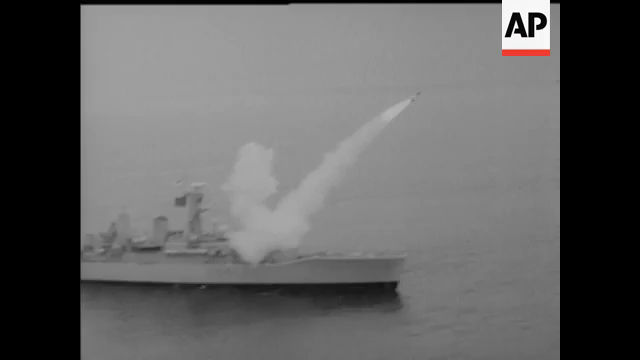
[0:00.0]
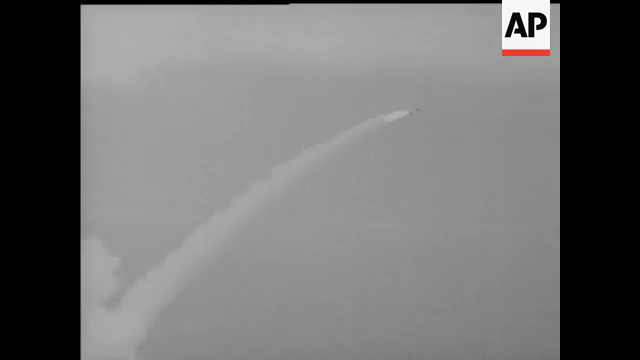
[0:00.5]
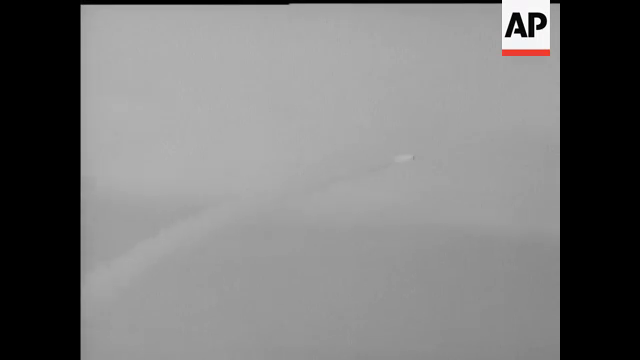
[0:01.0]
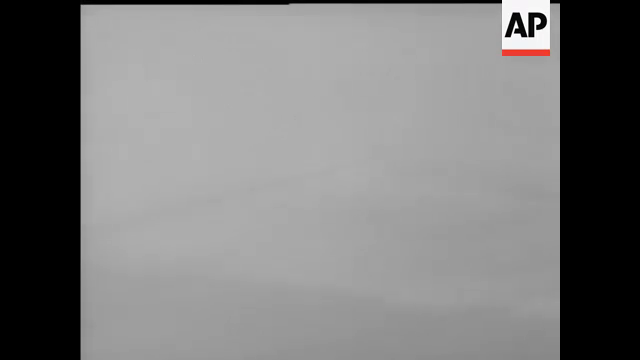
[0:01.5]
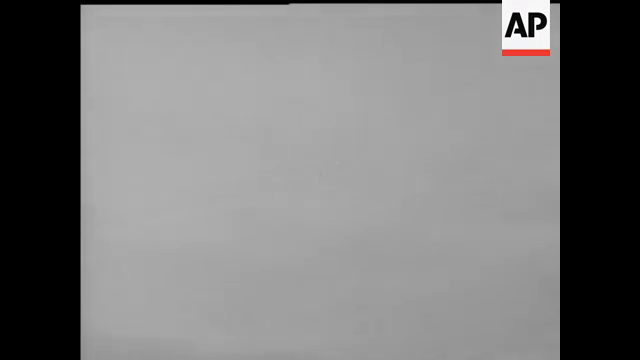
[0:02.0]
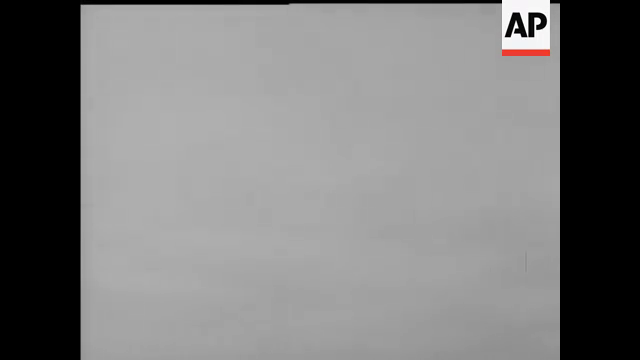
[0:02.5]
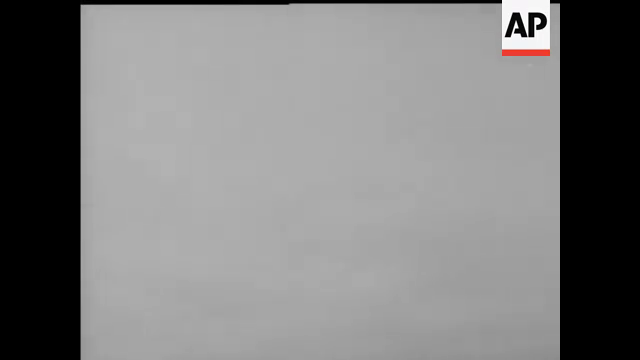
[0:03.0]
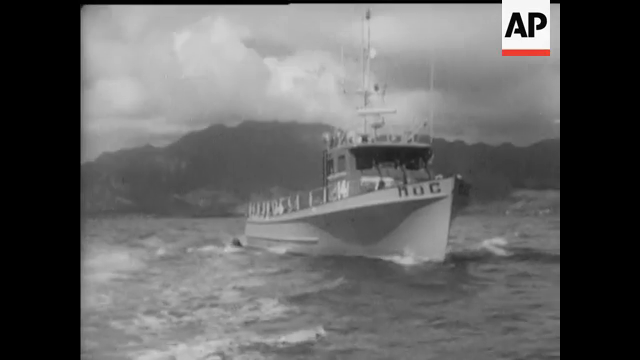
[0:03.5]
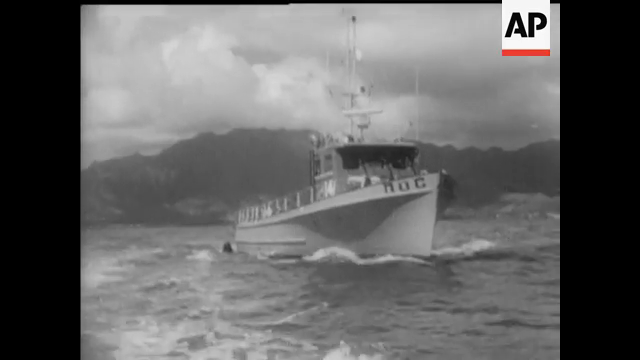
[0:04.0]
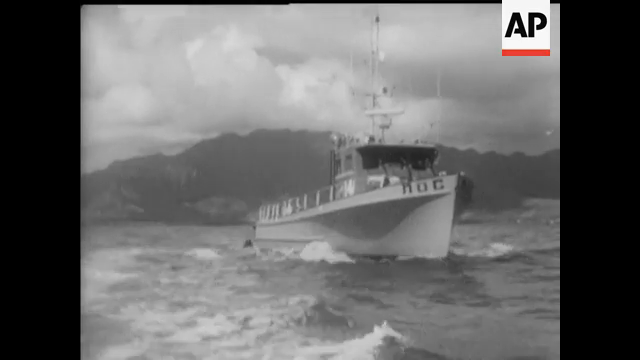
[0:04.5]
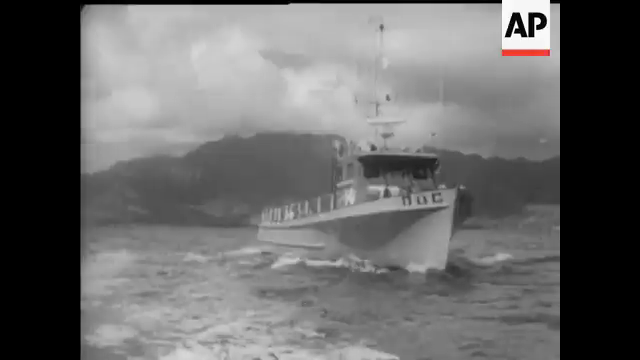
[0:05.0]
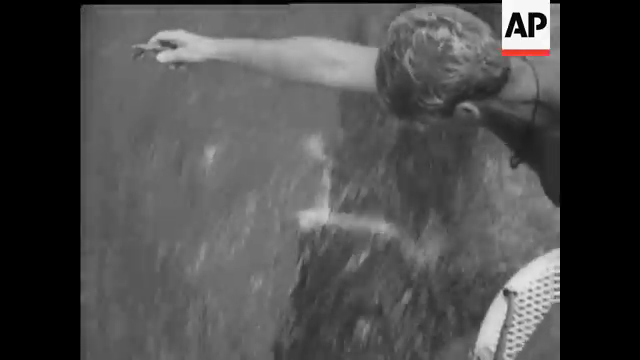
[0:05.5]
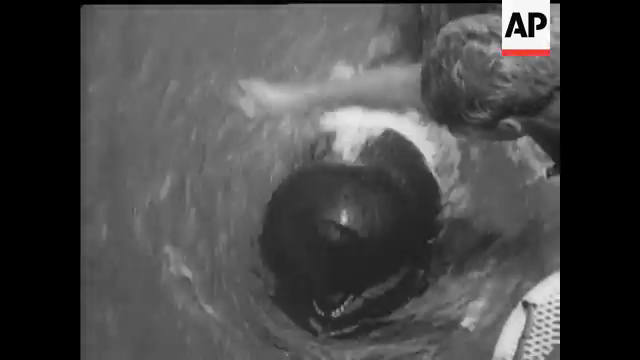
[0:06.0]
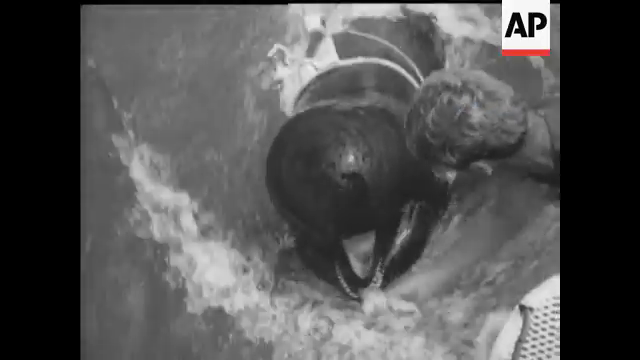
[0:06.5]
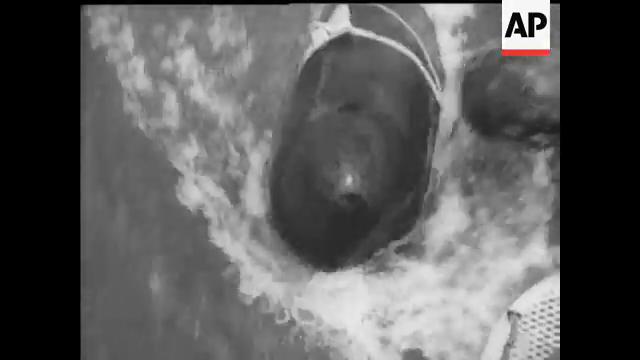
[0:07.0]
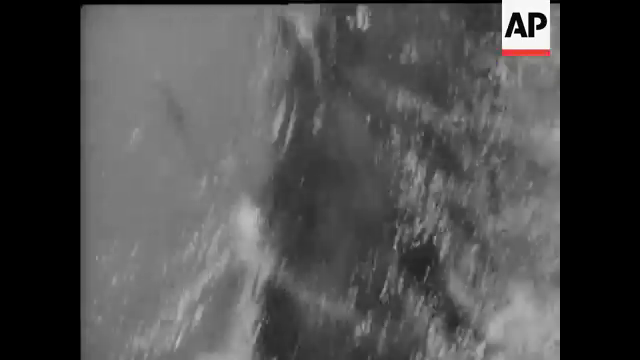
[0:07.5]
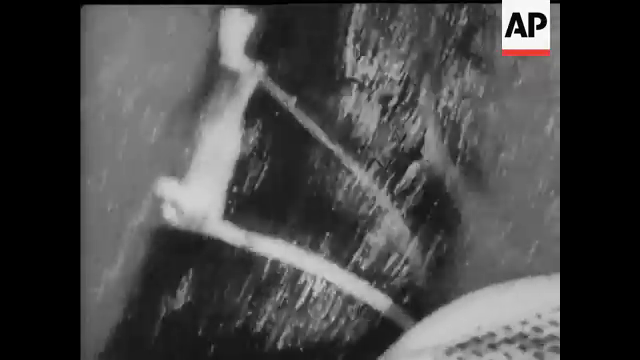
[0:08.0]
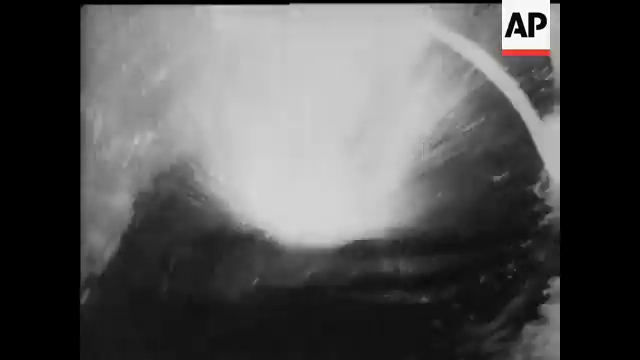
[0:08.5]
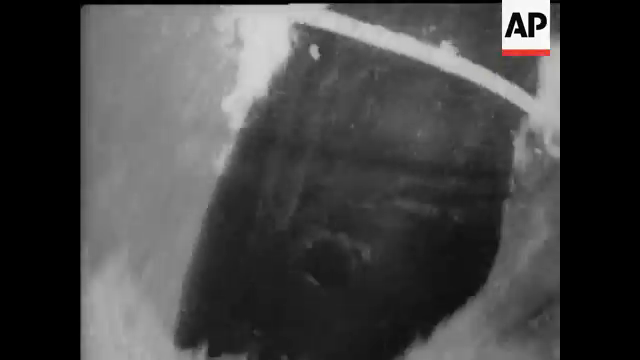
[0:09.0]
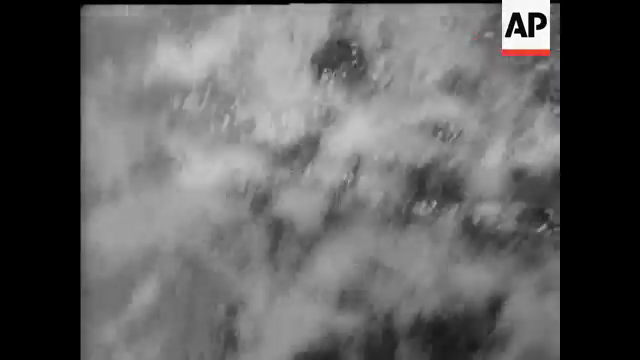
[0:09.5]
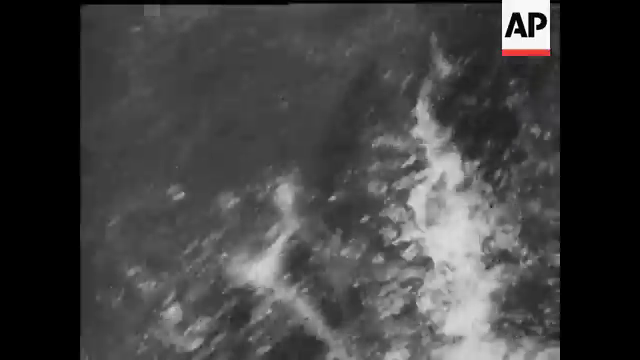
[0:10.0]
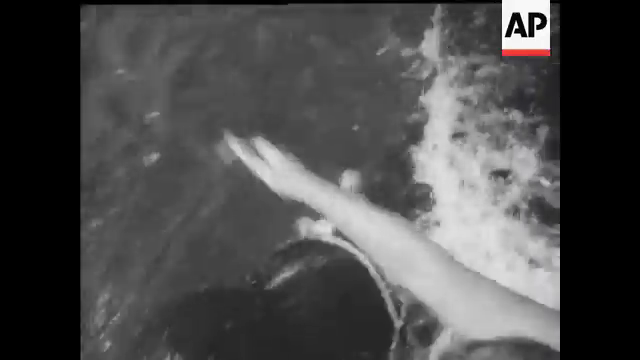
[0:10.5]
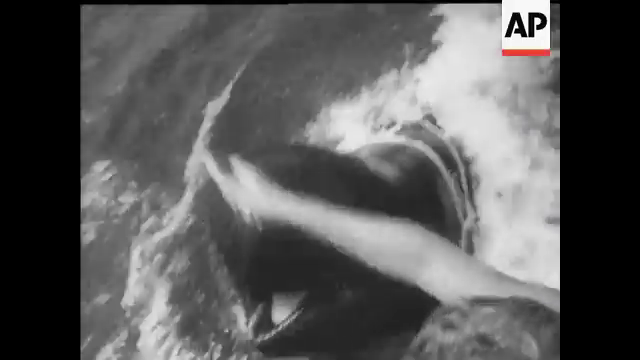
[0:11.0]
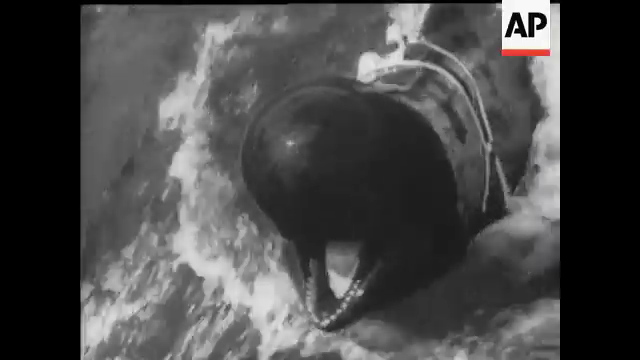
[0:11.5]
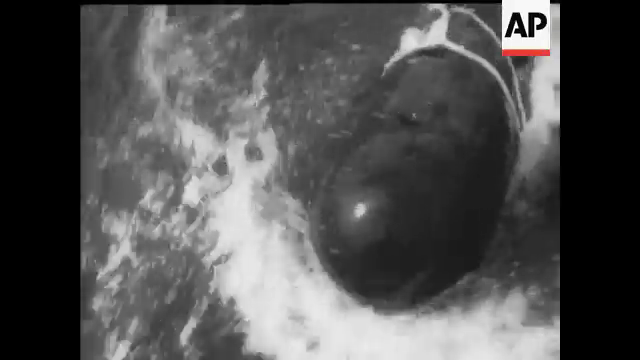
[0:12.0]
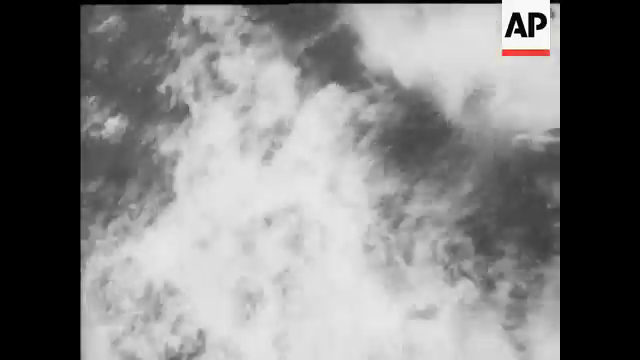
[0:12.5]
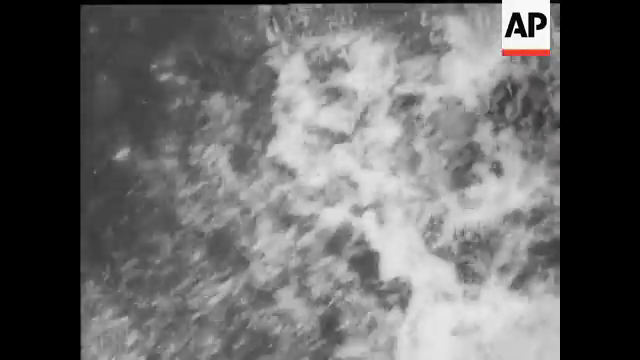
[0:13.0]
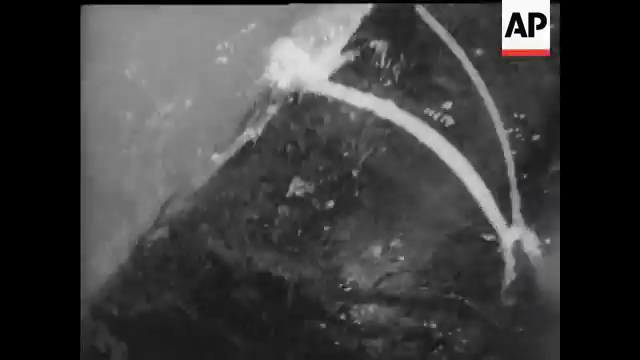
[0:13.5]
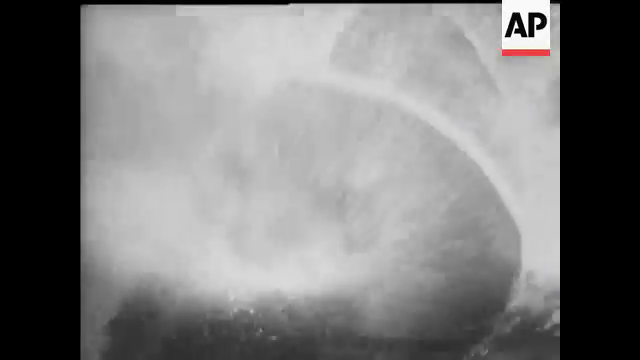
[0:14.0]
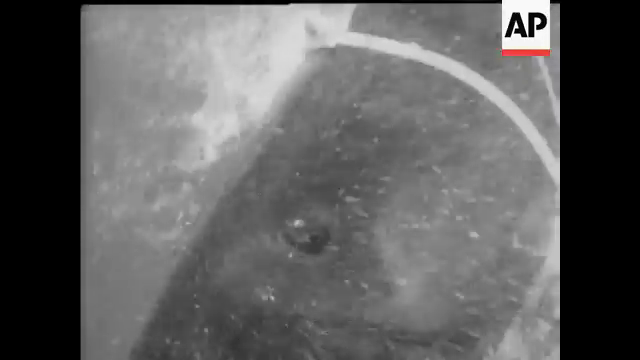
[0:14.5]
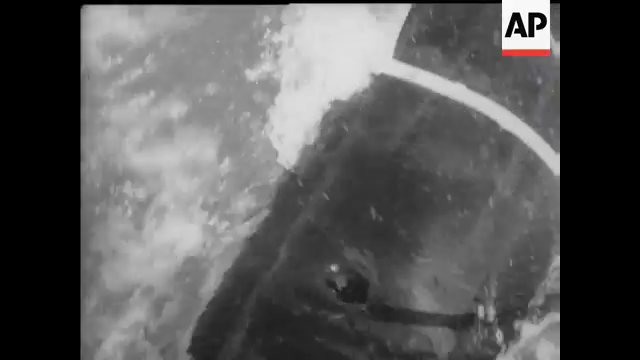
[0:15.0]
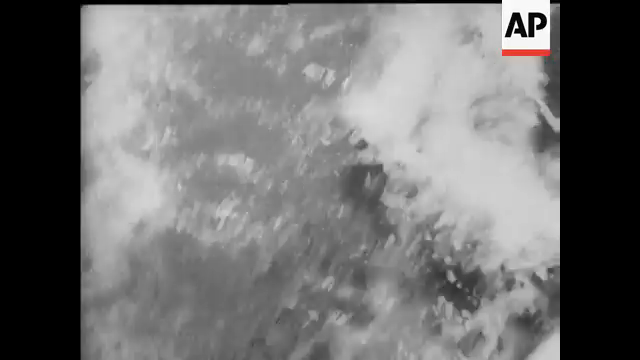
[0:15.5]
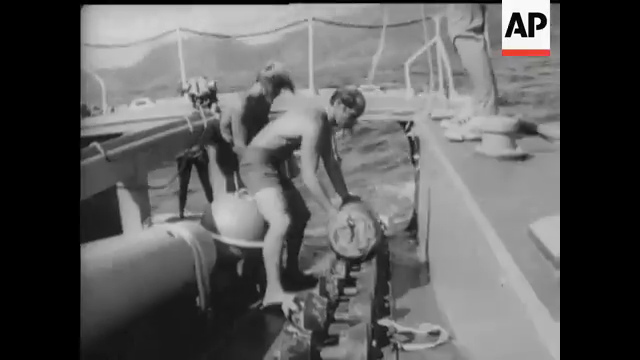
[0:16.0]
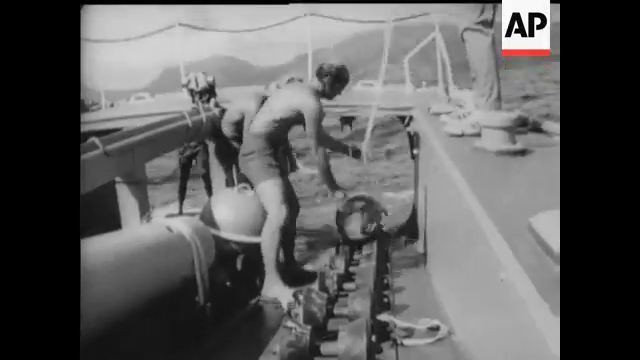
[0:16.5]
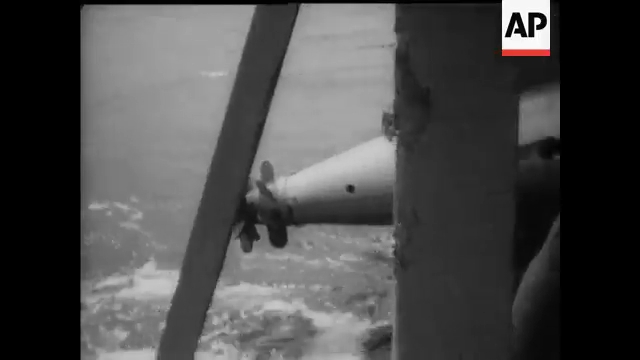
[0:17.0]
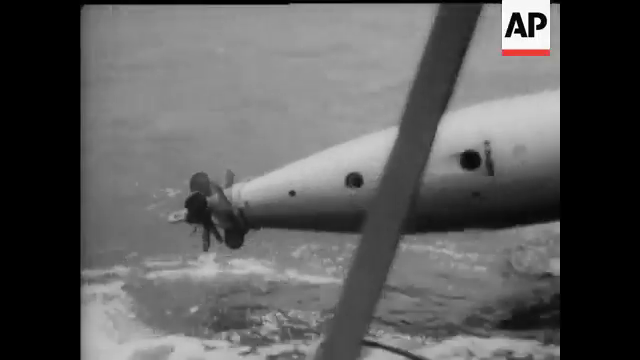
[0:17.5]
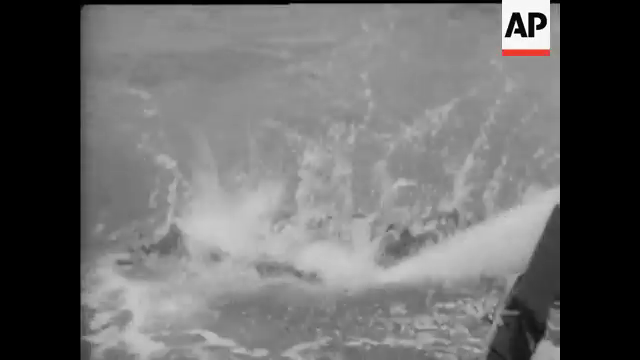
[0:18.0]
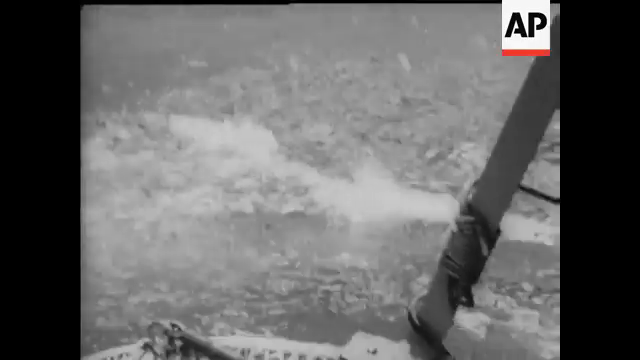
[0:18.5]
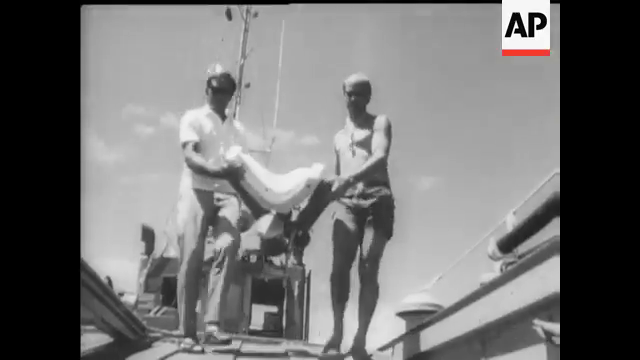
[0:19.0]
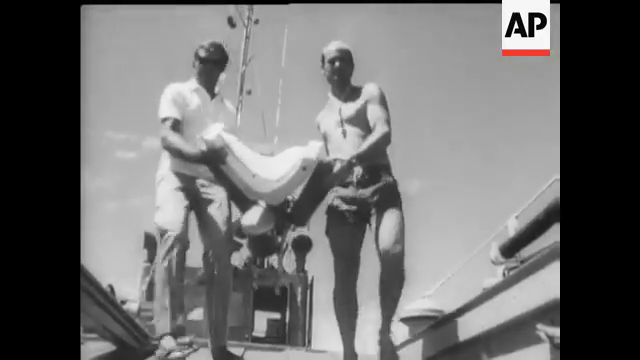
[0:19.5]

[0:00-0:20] Old black and white footage shows a warship firing a missile from its right side. The missile flies up to the right, leaving a lot of white smoke behind it. In the top right corner is the AP news organization icon, with "AP" in a white box that has a red bottom. The camera focuses on the missile as it flies into a cloud, until only a dark cloud is visible and the missile can no longer be seen. A different shot shows another ship that appears to have the initials "NUC" at its front; an island with grassy and foresty hills is in the background, with dark clouds above the ship. An overhead shot then shows a sailor sitting on a moving boat, reaching his right hand out. Below him is a black whale, apparently a beluga, whose head pops up from the water; it opens its mouth and looks at the sailor, and the sailor retracts his right hand. A close-up shows the back of the whale moving through the water, with a white strap around its center. Another shot shows the whale opening its mouth as it moves through the water, and then the whale shoots water out of its blowhole. On a ship, sailors wearing only shorts move objects. A close-up shows what looks like the end of a torpedo being lowered into water. Finally, two sailors carry a piece of equipment: the one on the right wears only shorts, and the one on the left wears a white polo shirt and light-colored slacks.